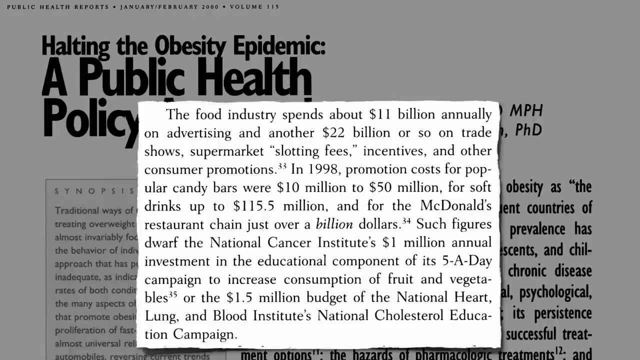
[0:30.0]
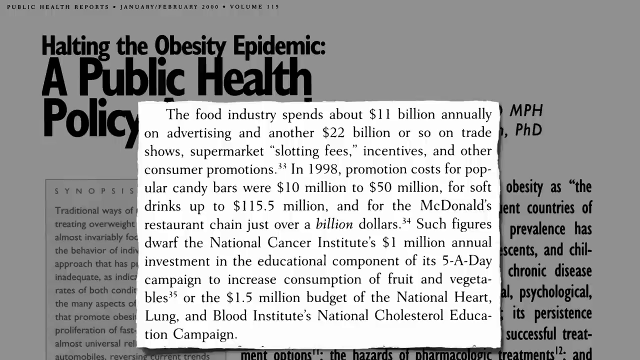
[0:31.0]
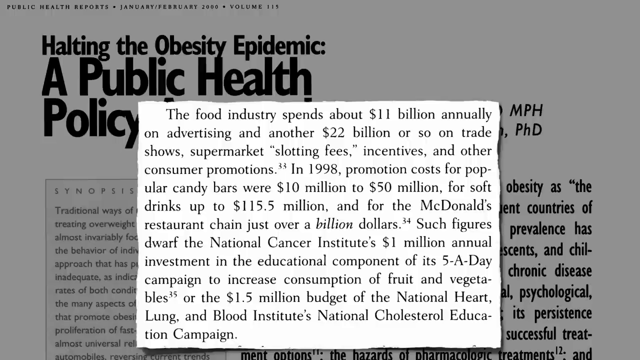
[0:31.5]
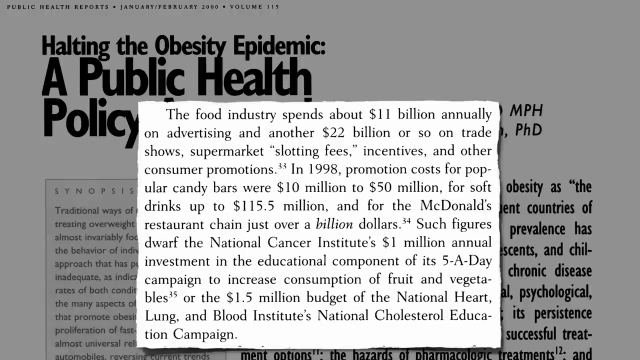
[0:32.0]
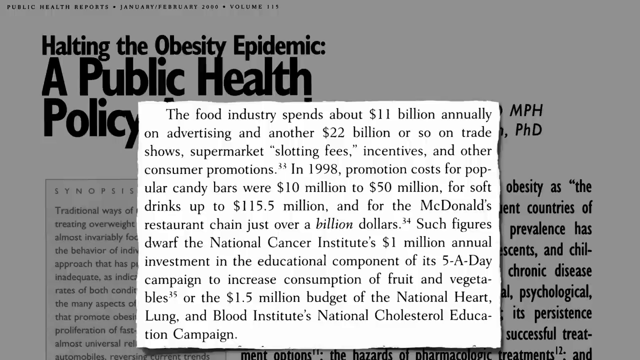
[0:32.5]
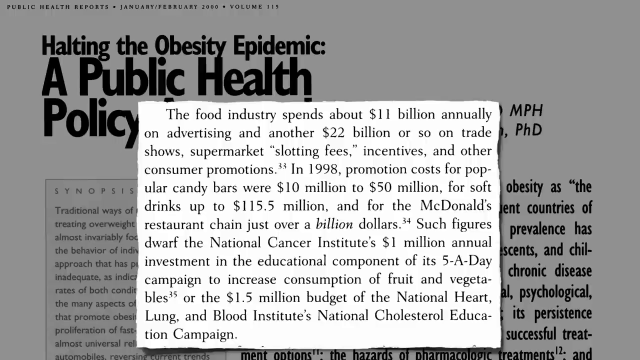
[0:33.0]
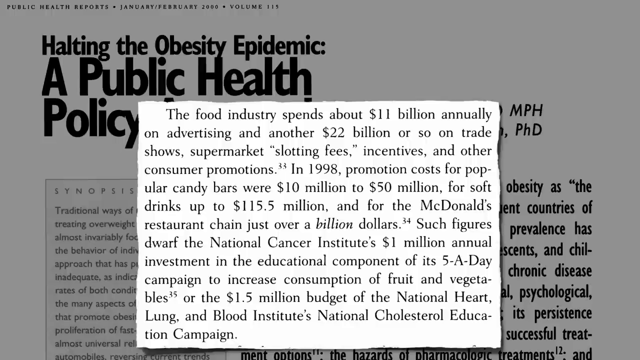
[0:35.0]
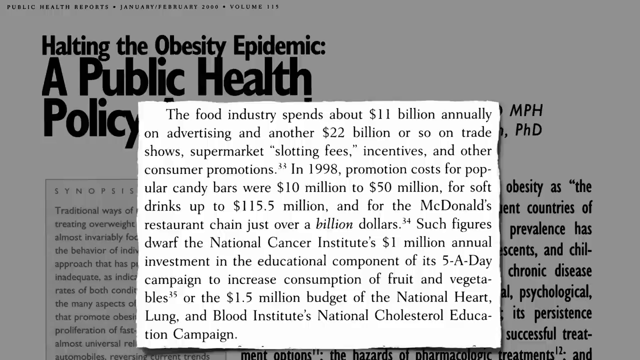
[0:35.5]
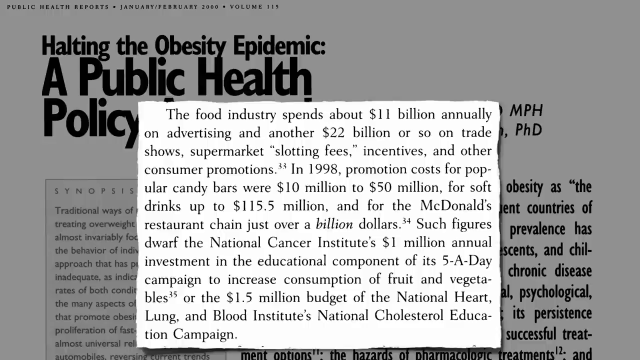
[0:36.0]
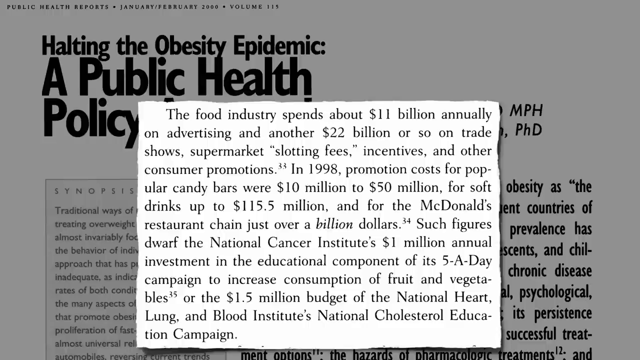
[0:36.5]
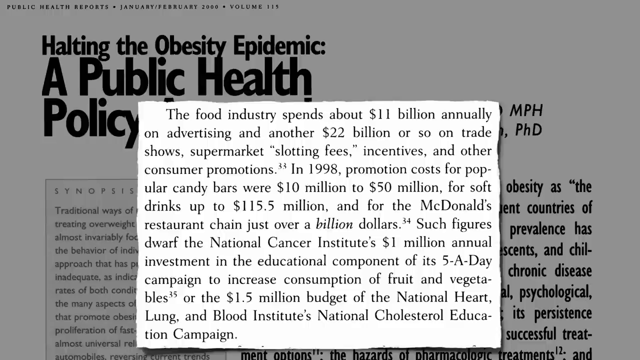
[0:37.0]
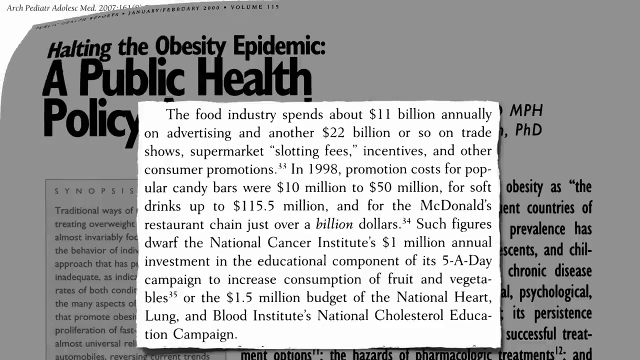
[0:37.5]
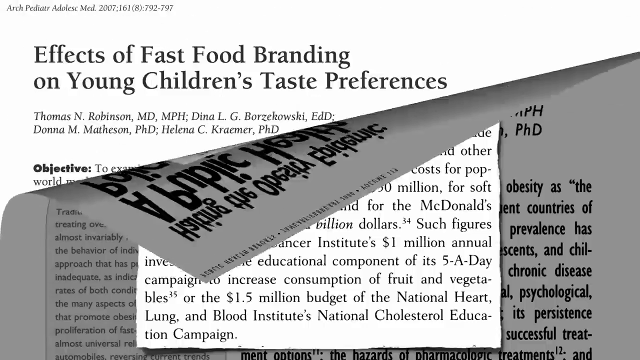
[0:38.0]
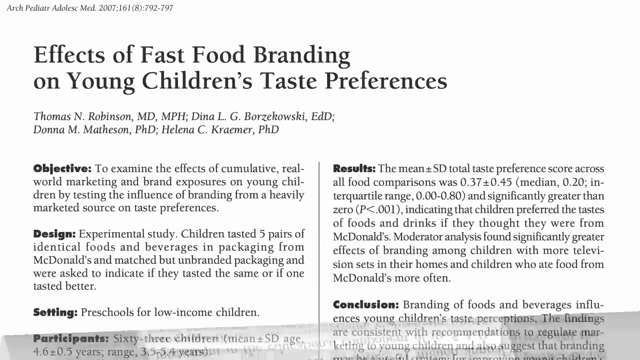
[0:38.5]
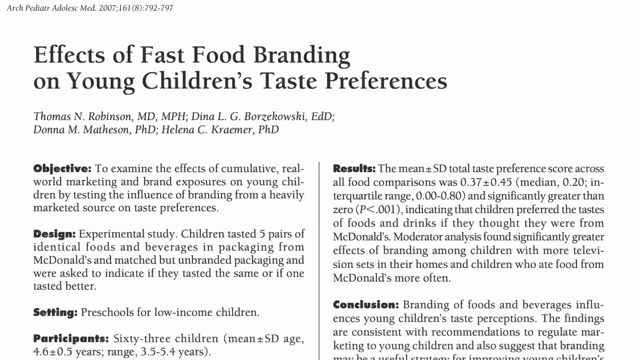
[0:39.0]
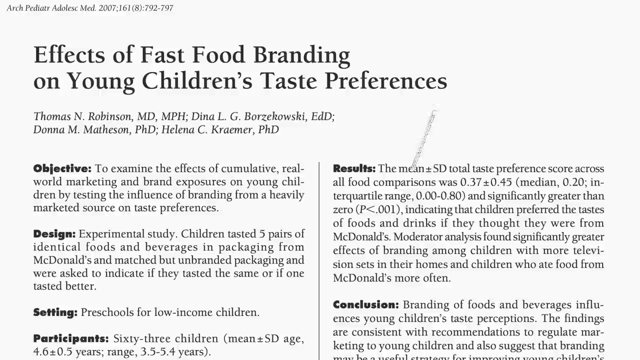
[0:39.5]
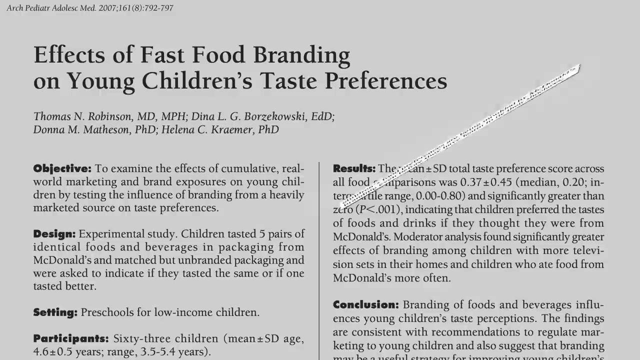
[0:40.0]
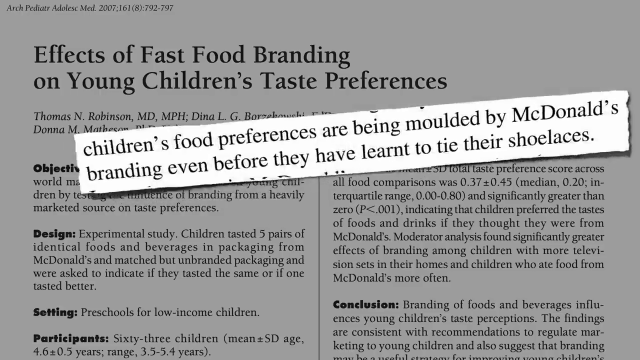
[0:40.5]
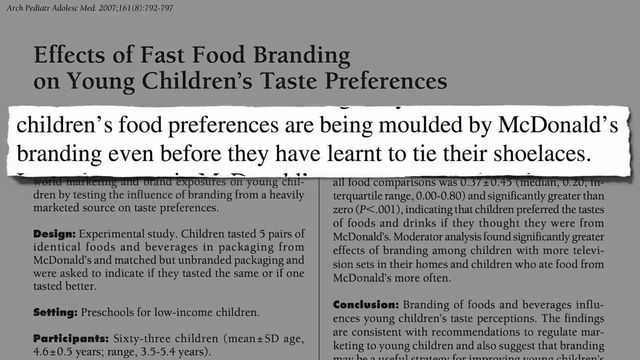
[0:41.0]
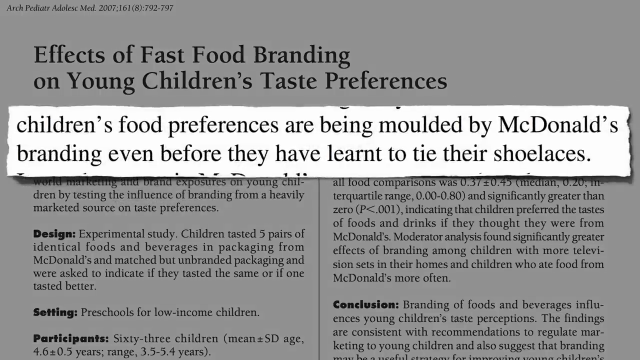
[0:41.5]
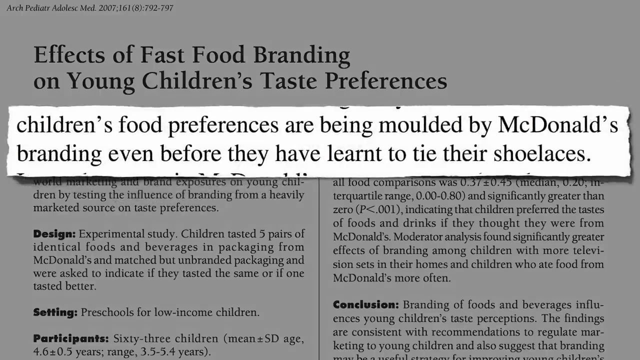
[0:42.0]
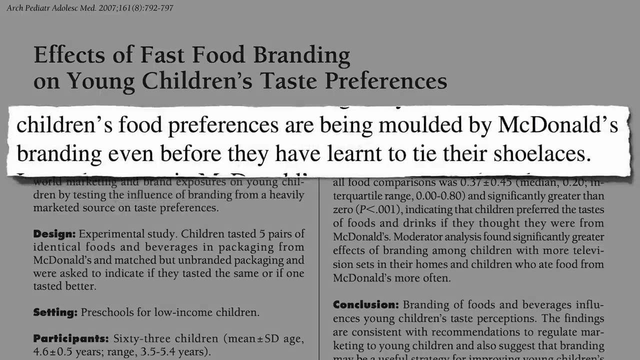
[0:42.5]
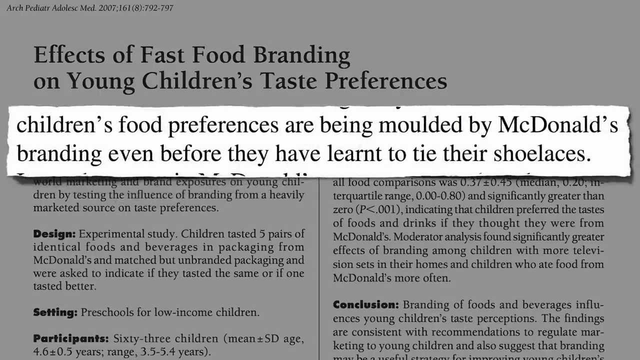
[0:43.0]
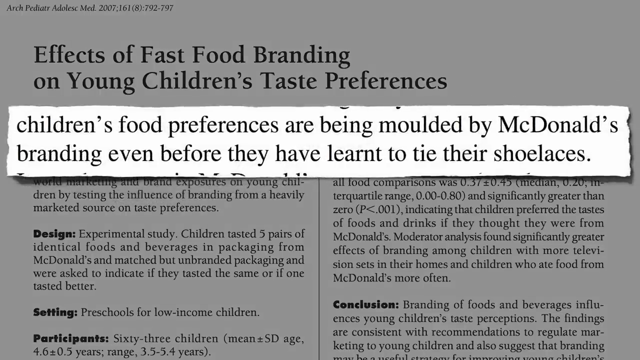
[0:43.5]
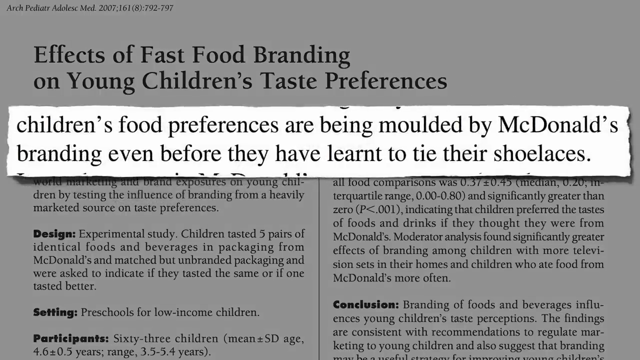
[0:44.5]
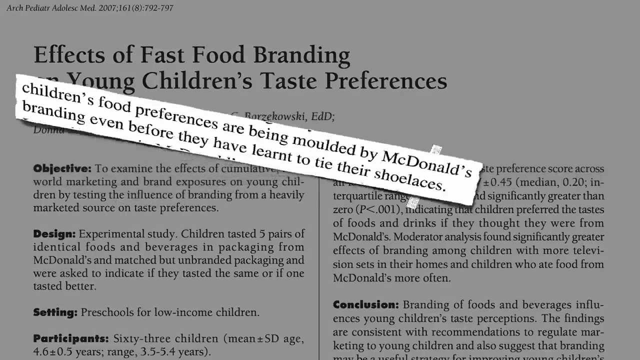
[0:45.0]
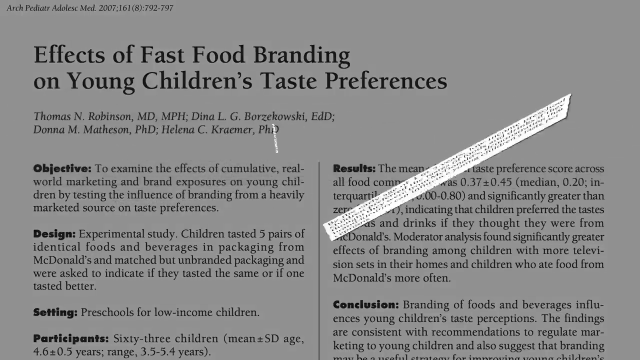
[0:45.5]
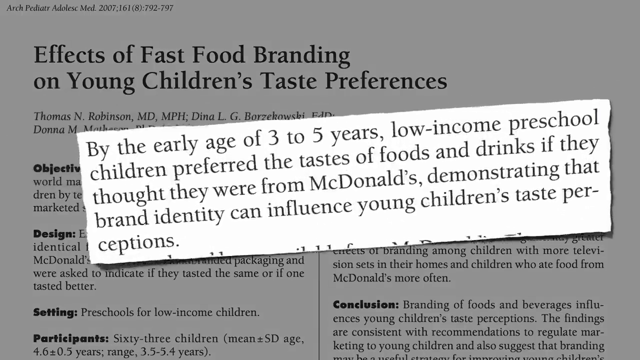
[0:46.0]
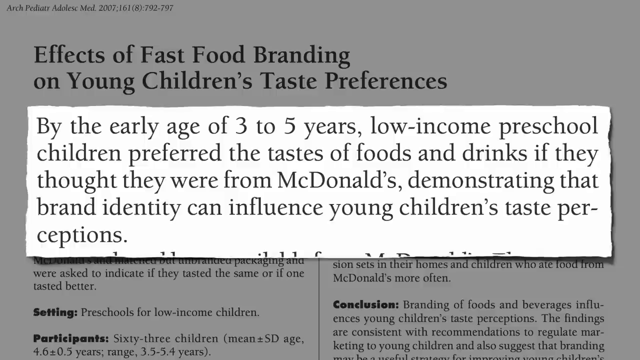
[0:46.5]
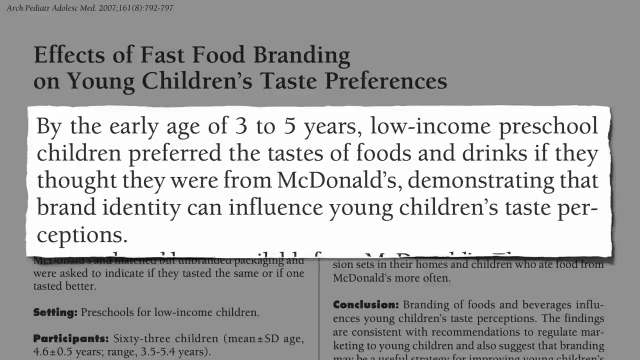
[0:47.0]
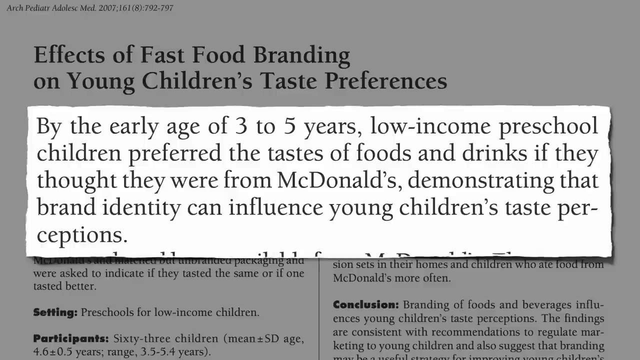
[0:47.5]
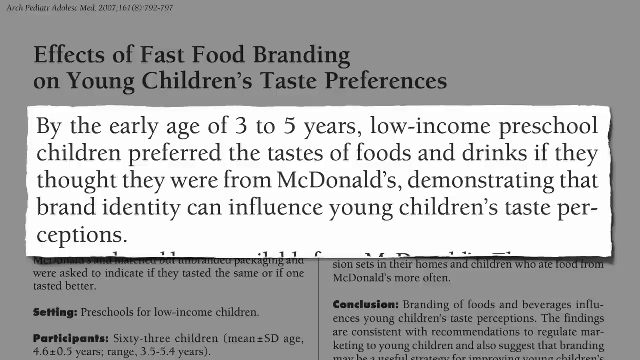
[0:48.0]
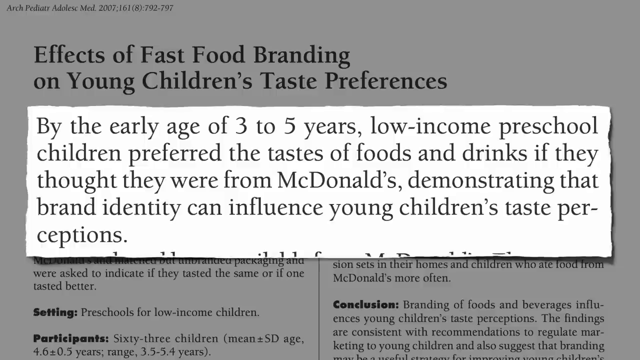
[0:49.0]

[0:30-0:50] The same newspaper article remains in the background with the cutout front and center. The page fades out by folding over from the top left corner to the bottom right as it is removed from the screen, and a new article appears reading "Effects of Fast Food Branding on Young Children's Taste Preferences." Highlighted facts flip into the middle of the screen: "by the early age of three to five low-income preschool school children preferred the taste of foods and drinks if they thought they were from McDonald's, demonstrating that brand identity can influence young children's taste perceptions." This excerpt is a rectangular cutout, front and center on the page, with a lighter white background than the rest of the article.